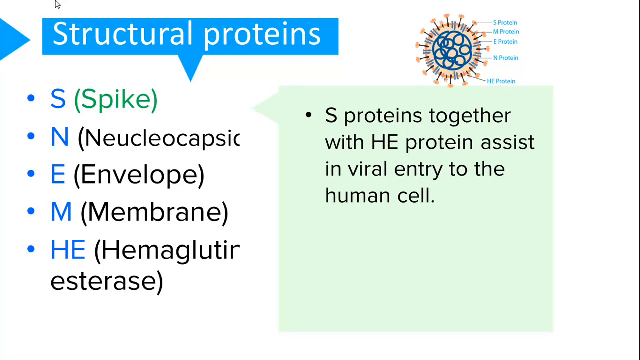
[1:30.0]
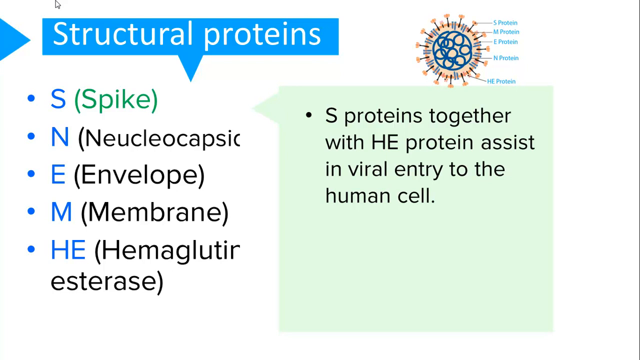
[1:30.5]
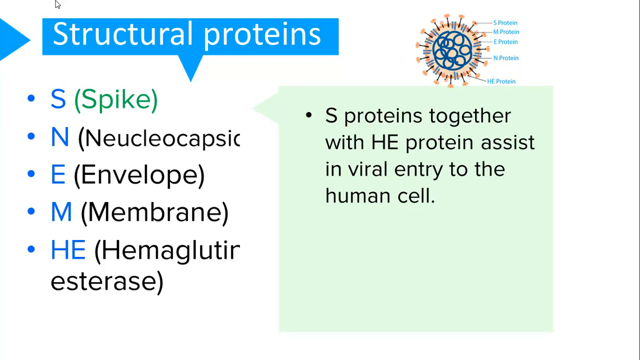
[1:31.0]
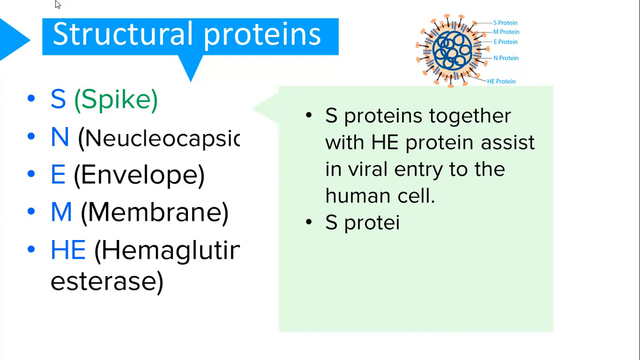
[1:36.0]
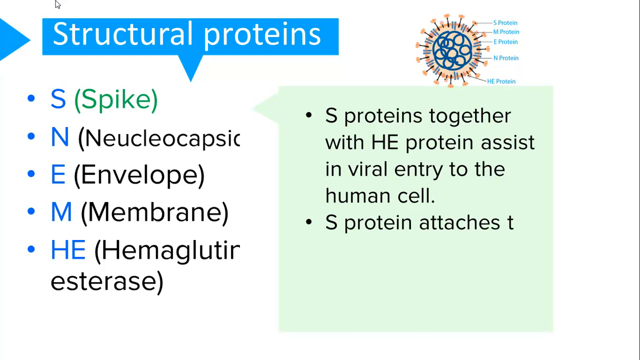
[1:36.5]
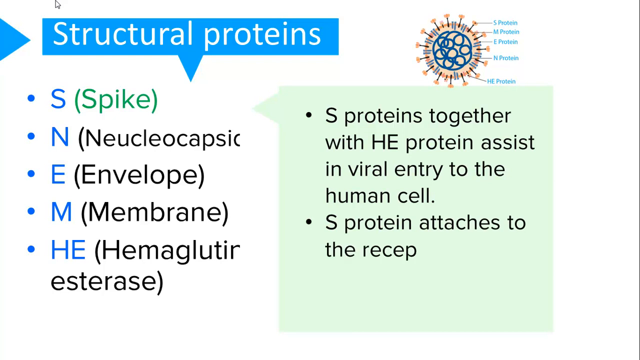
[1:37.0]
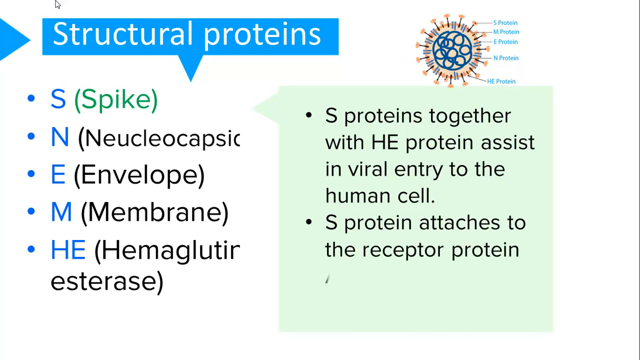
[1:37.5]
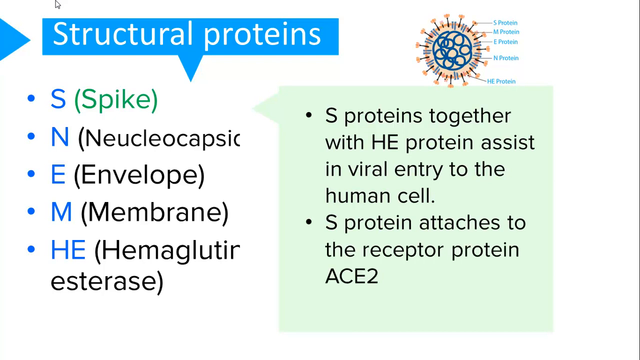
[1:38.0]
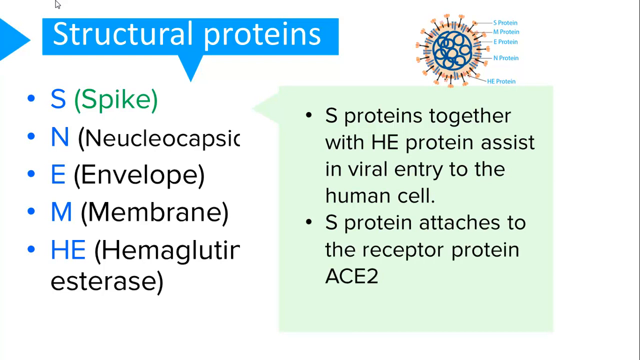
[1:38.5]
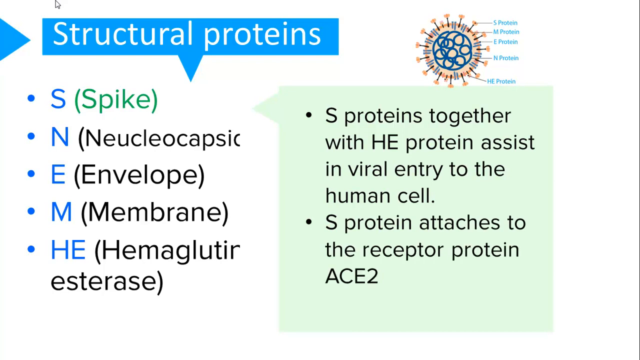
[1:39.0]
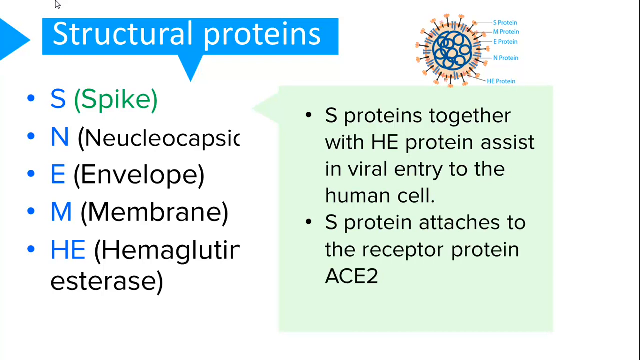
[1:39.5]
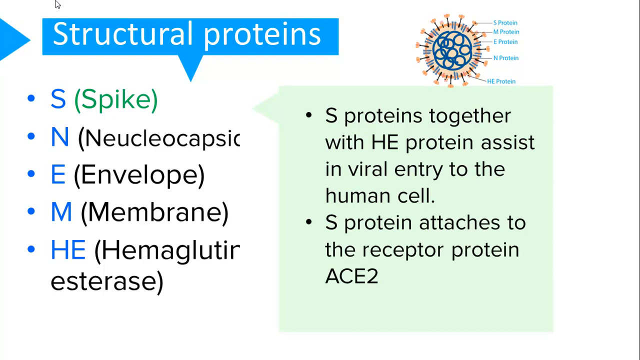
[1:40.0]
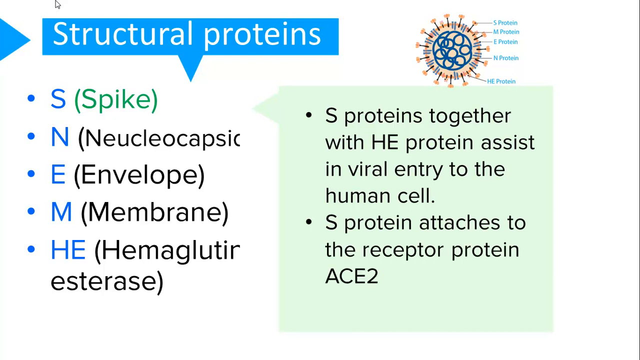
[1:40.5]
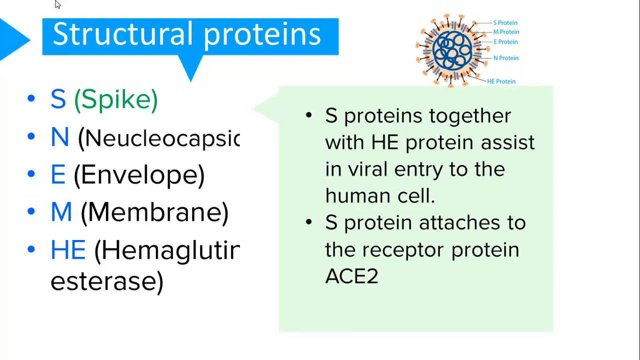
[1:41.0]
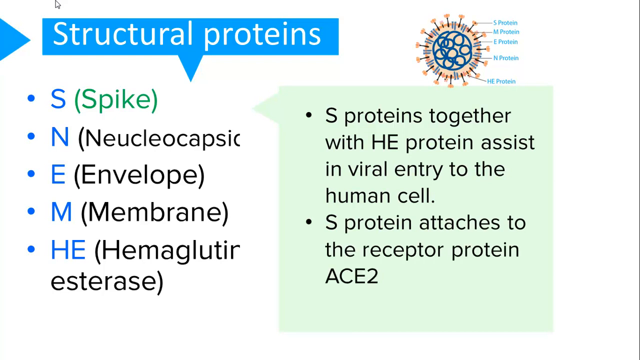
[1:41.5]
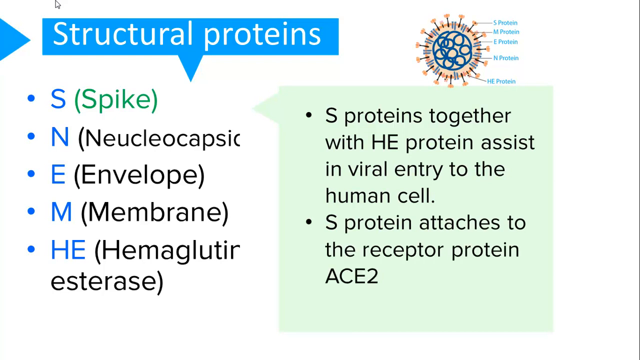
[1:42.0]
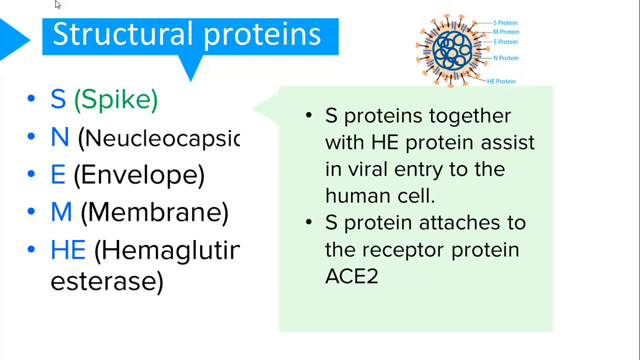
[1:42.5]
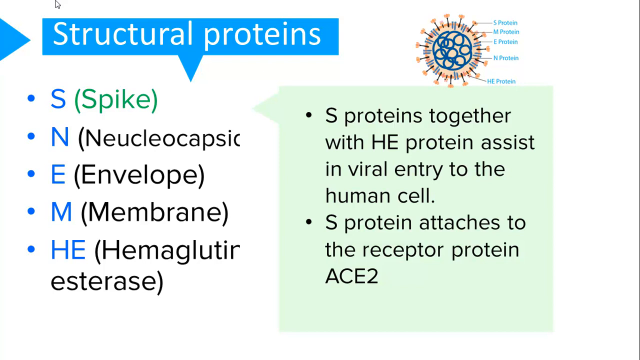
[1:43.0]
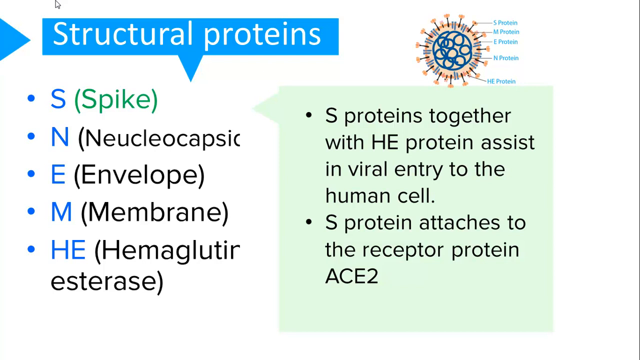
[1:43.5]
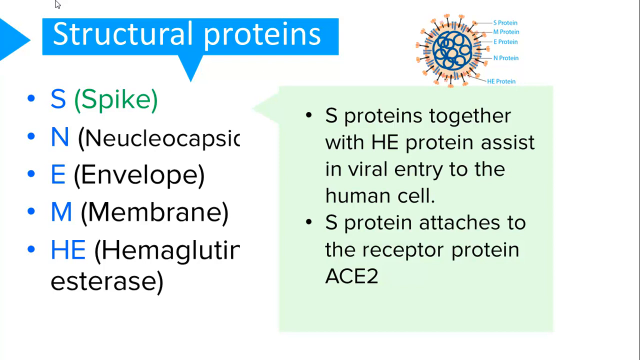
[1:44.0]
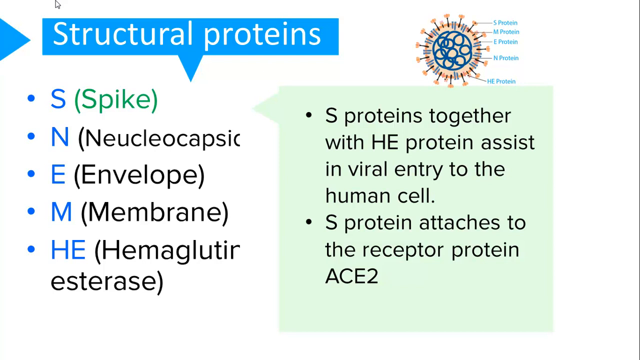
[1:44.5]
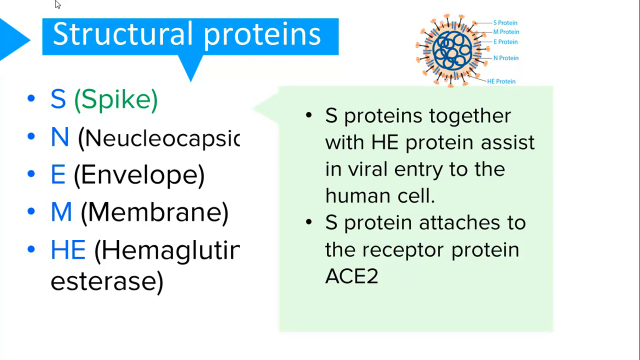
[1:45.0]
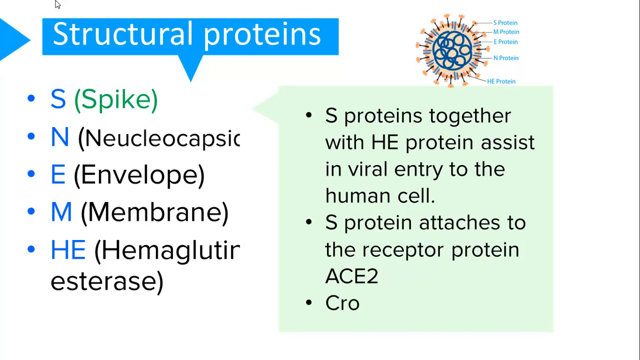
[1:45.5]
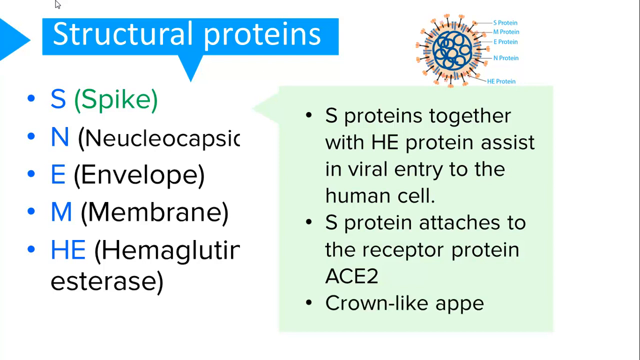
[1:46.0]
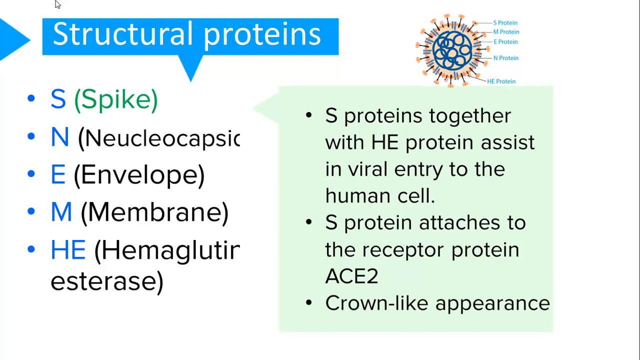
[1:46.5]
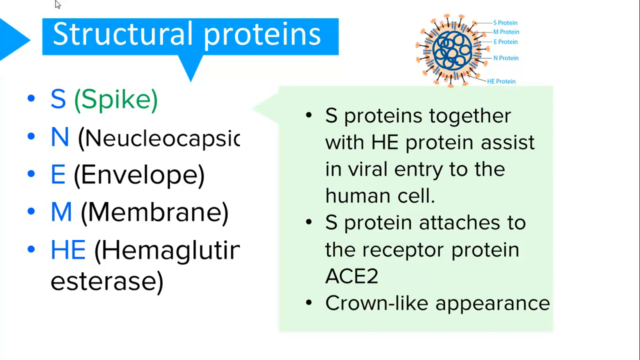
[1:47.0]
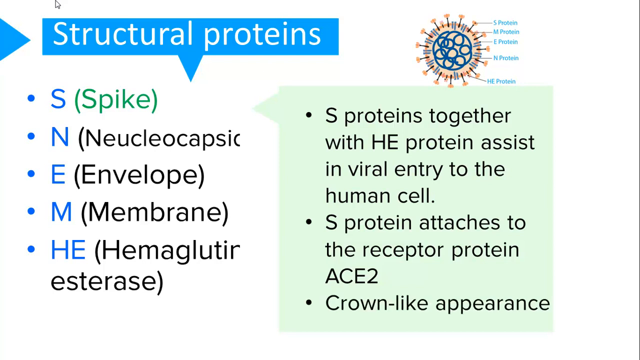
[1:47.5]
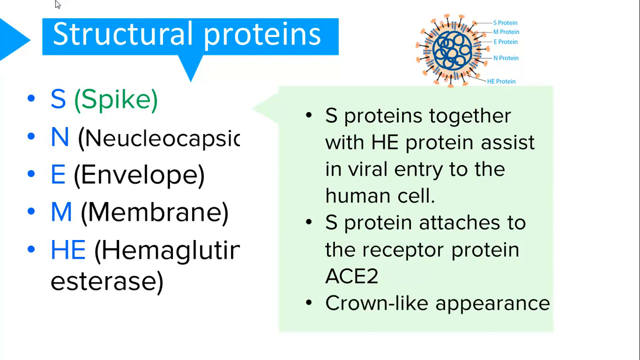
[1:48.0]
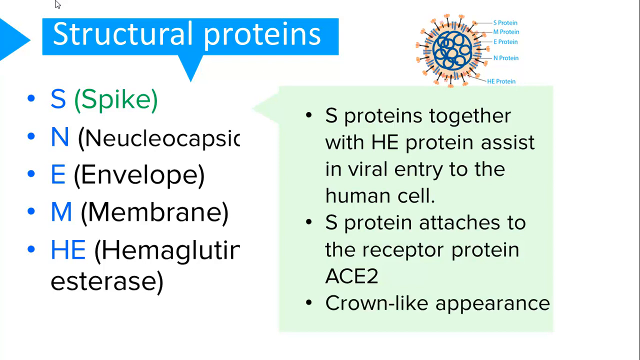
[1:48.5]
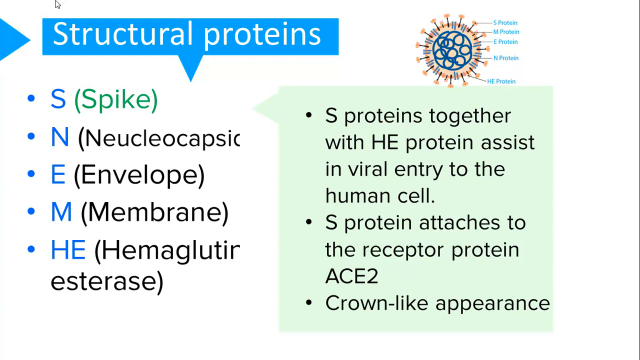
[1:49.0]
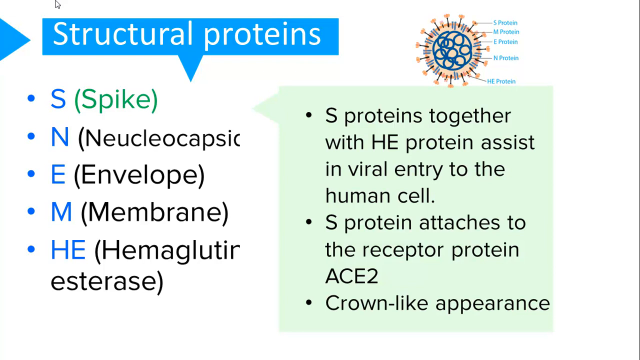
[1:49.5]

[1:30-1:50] A bullet point in the green rectangle, next to the original list underneath "Structural Proteins", reads that S-proteins together with the H-E protein assist in the viral entry to the human cell. The next bullet point says that the protein attaches the receptor protein of the ACE2, and the last bullet point states that it has a crown-like appearance. The list is just underneath the small orange and blue image of the COVID-19 virus, which still has five blue lines pointing out from its right side labeling the different proteins. The green box partially obstructs the text inside the parentheses in the list next to it. The word "spike" in the first parentheses is written in green.